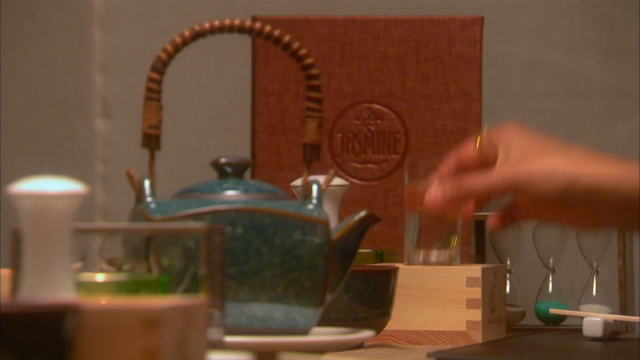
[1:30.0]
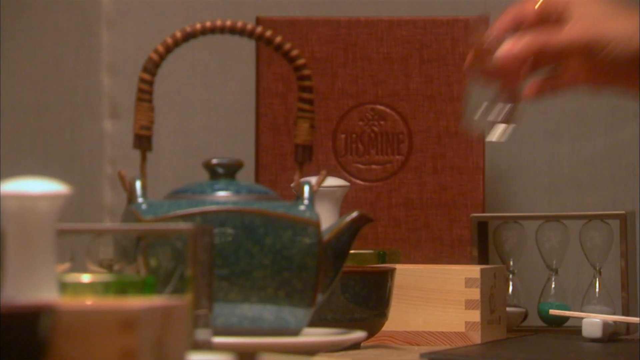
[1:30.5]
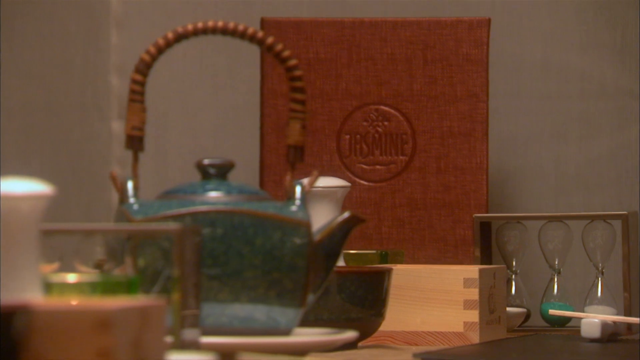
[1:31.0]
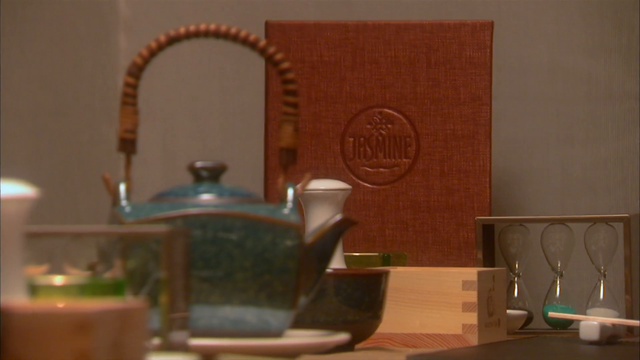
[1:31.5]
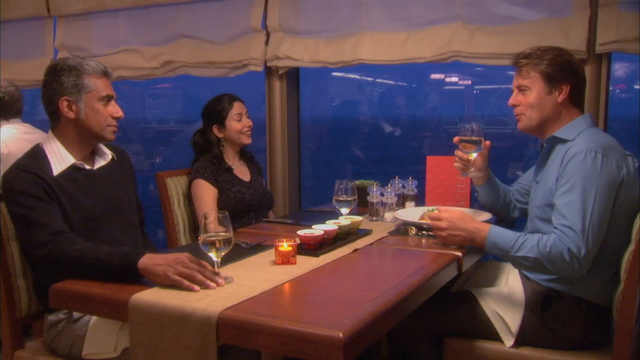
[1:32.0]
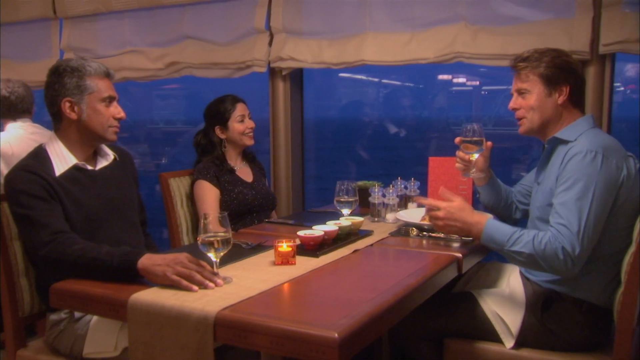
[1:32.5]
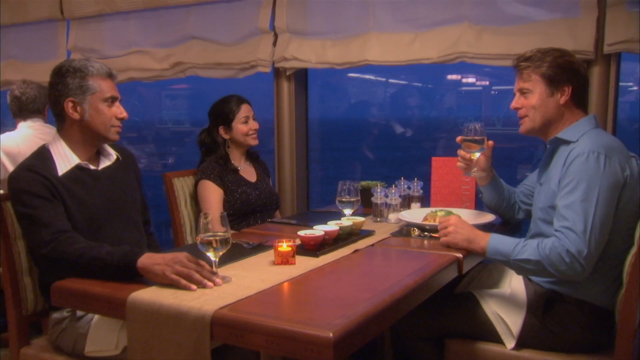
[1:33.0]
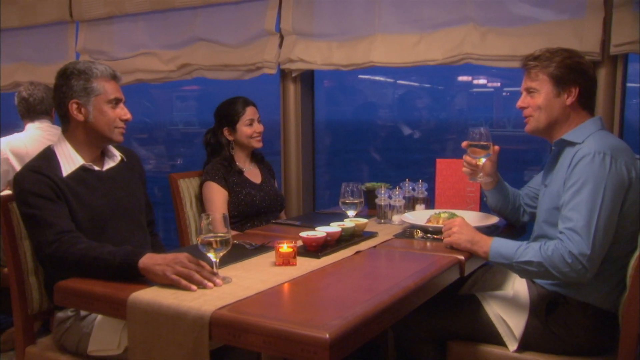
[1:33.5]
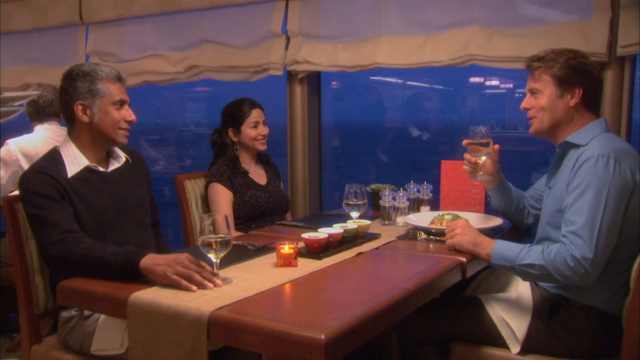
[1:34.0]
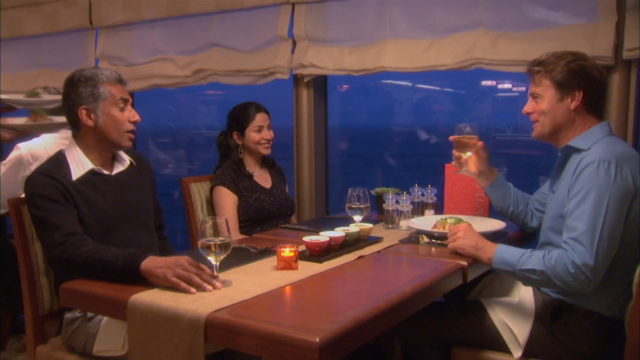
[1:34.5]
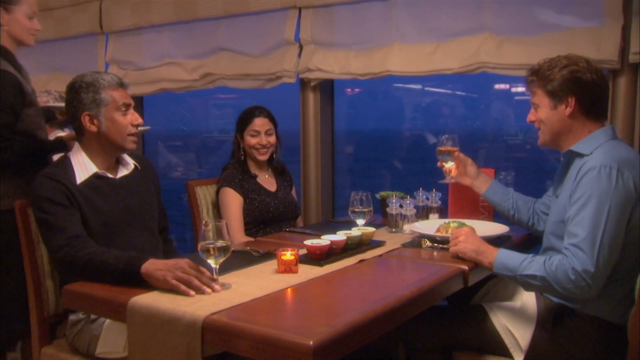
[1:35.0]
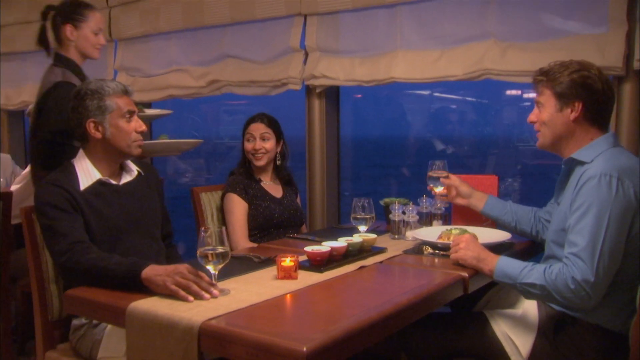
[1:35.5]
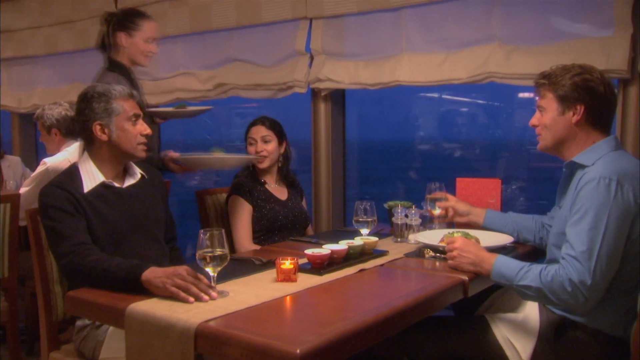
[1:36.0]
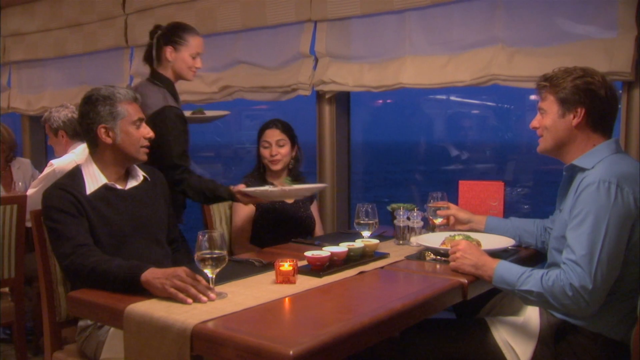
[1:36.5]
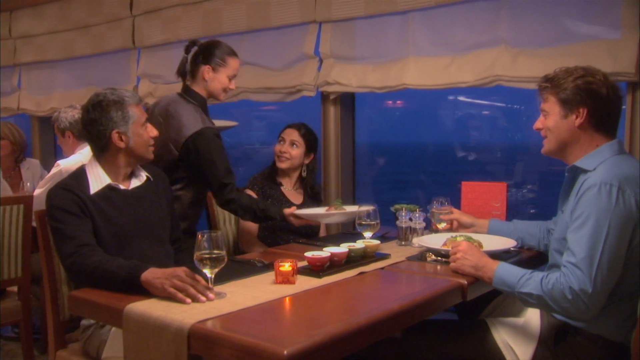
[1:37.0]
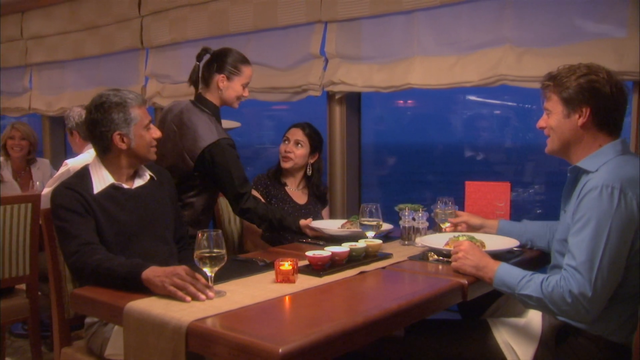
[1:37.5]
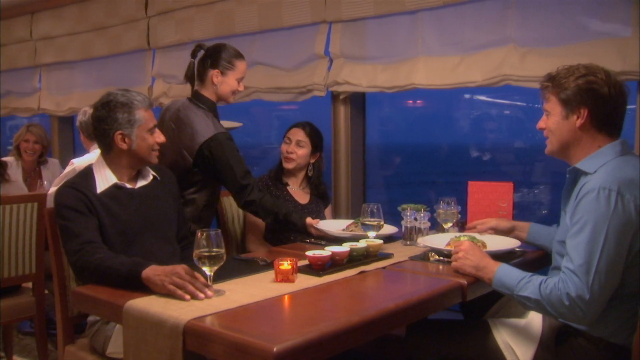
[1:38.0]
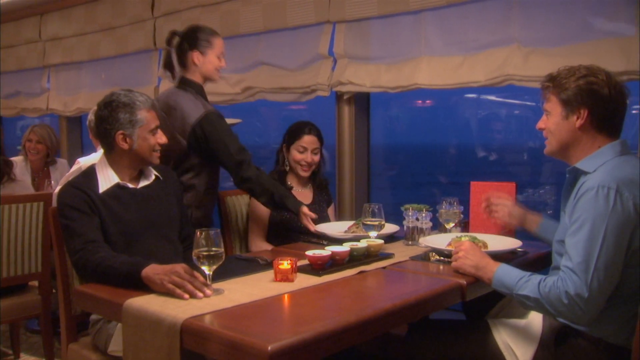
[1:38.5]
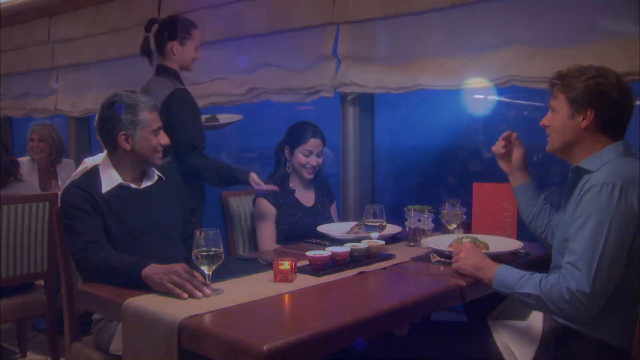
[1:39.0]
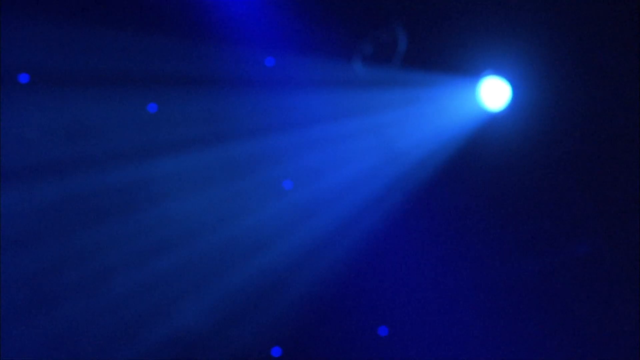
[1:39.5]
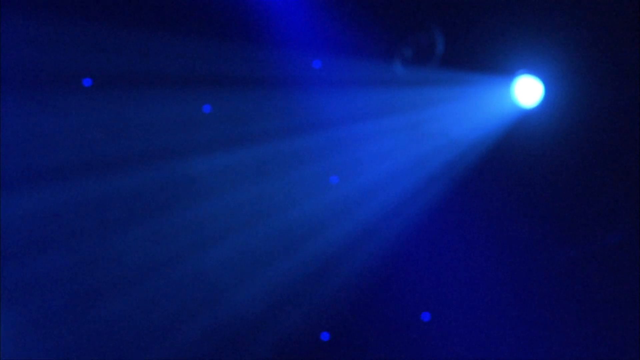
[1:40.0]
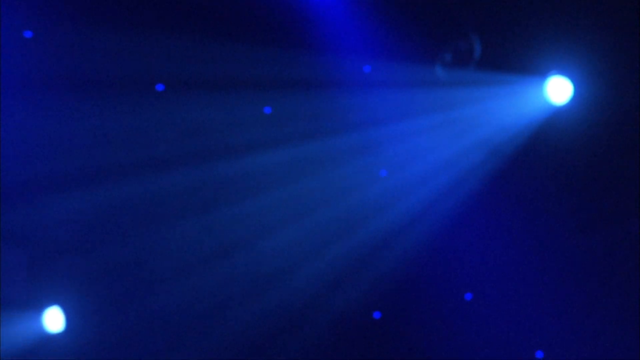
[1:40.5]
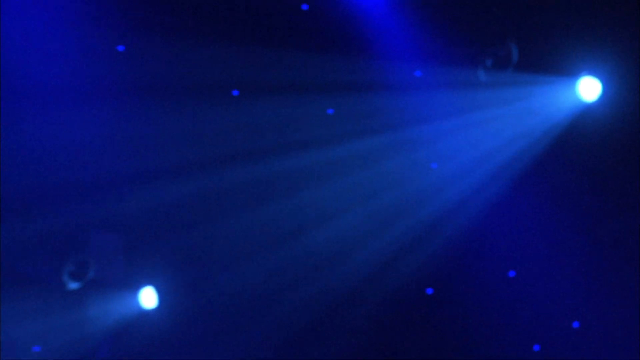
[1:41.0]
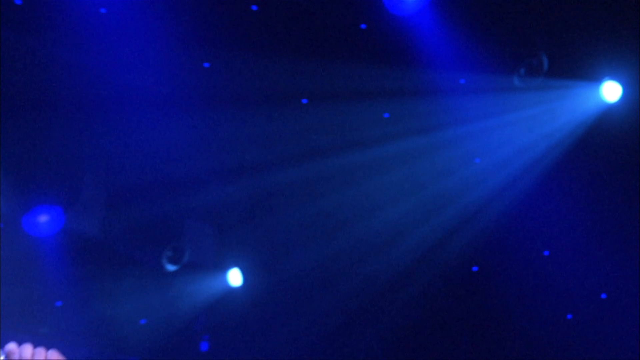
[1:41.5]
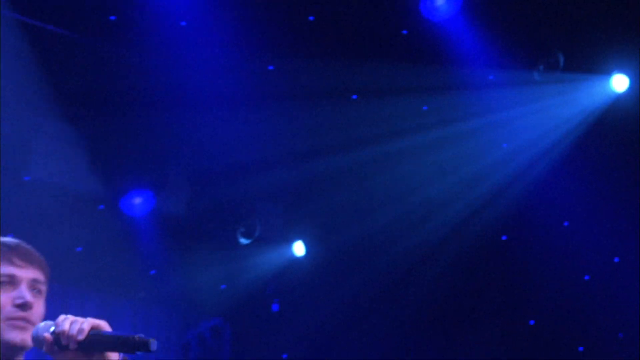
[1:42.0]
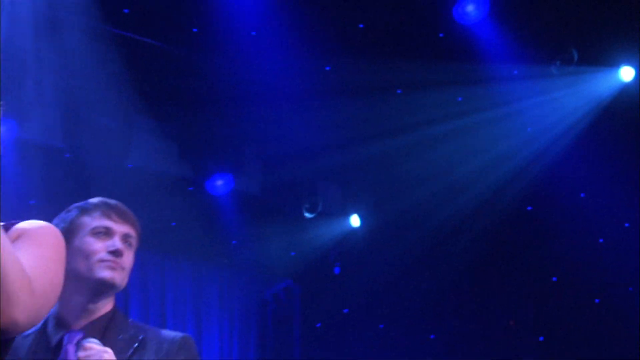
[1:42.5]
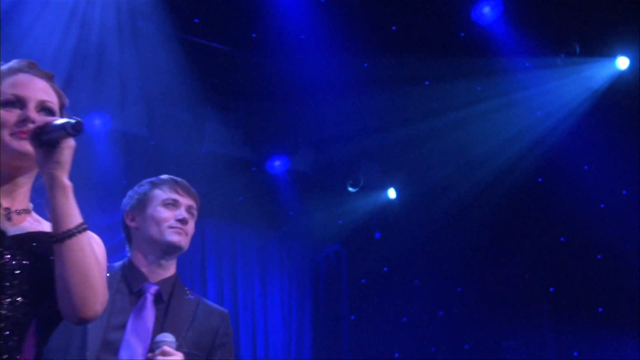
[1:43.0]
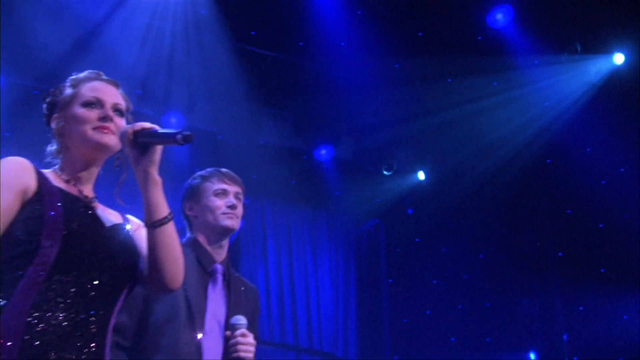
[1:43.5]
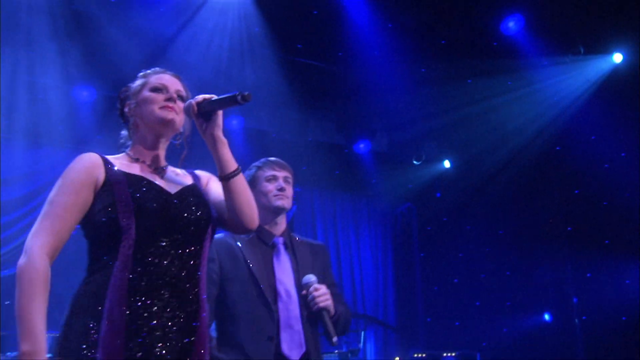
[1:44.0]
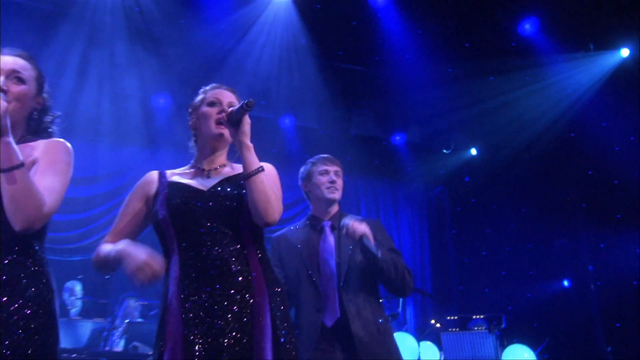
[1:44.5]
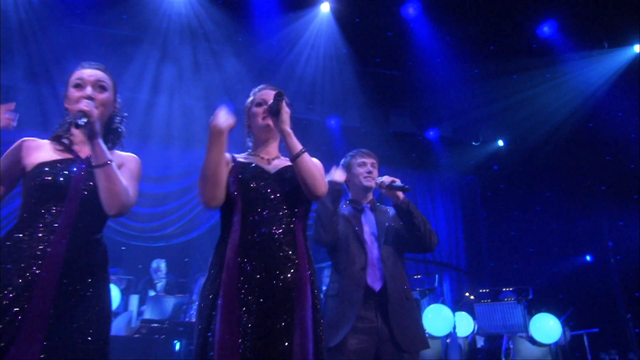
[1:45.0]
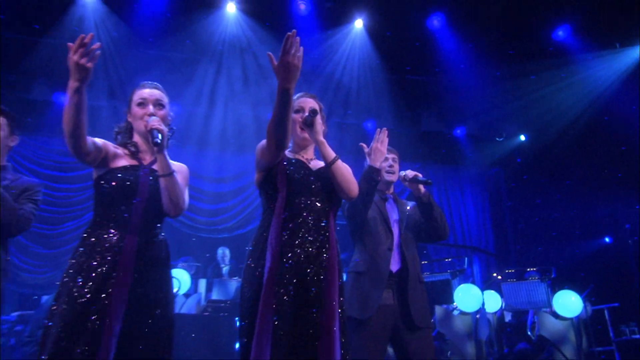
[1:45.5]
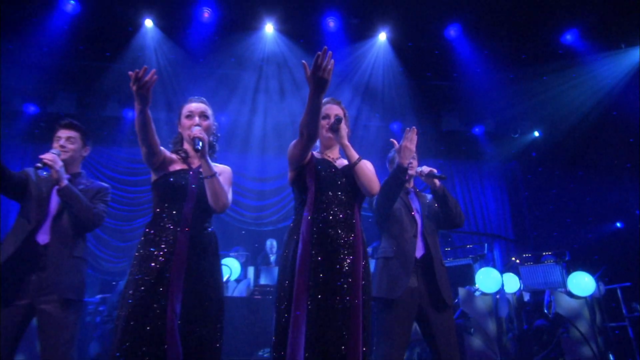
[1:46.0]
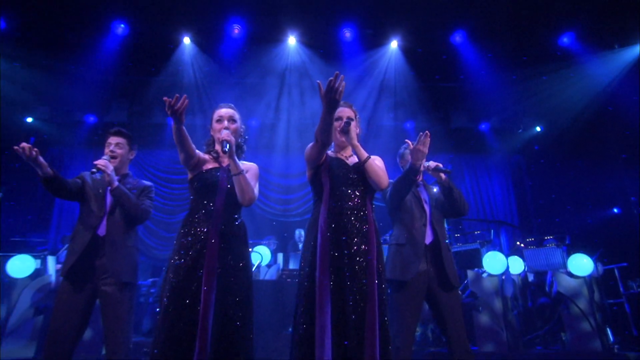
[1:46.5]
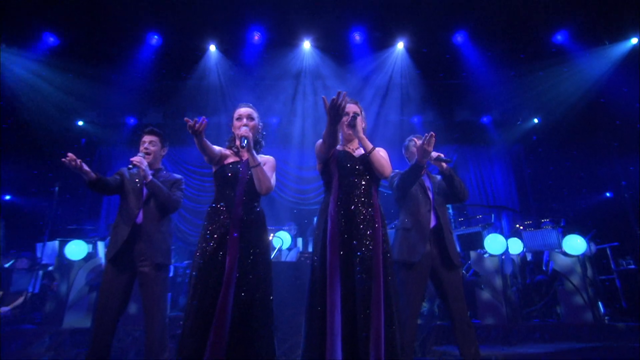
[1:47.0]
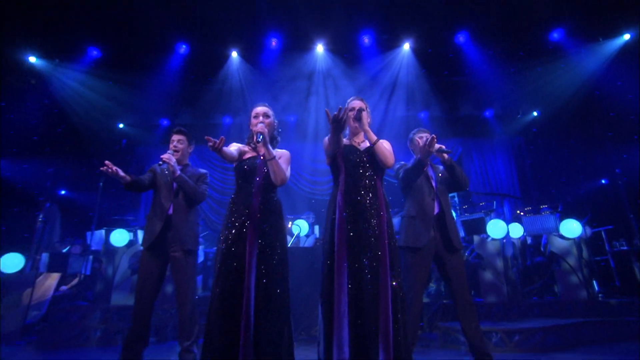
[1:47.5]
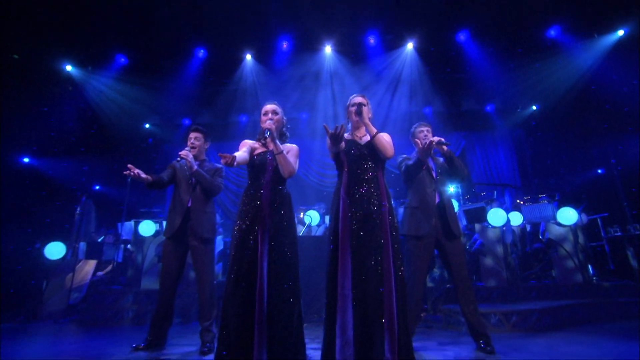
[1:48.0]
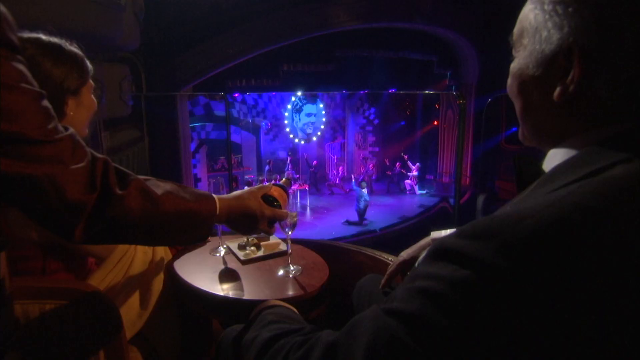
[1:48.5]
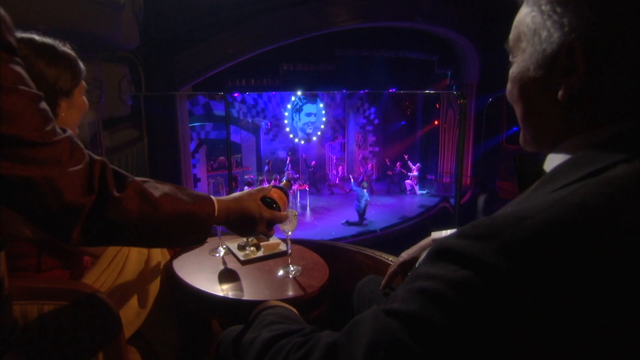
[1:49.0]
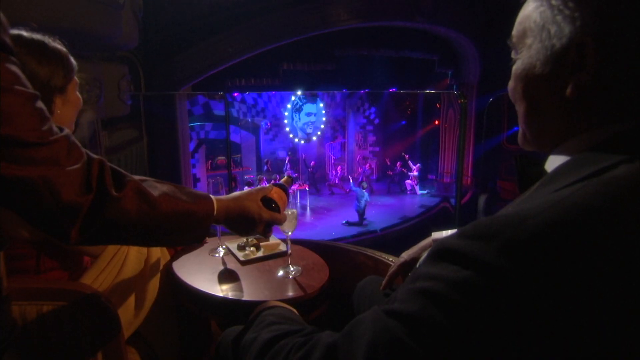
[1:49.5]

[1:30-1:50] A turquoise kettle with a brown handle is on top of a table, and a drink is poured into a clear glass. The scene changes to a table by a window overlooking a dark ocean, where three diners appear to be enjoying just drinks: a man in a black sweater over a white shirt, a woman in a black dress, and a gentleman in a blue shirt. Right at the end of the shot, the woman is served a plate of food. The scene then changes to people enjoying a show in some sort of theater. A spotlight is on three singers, a man and two women, and then the shot widens to show another man; a couple is seated in the audience watching. The two men and two women on stage are dressed nicely, the women in long black dresses, and they sing to the audience using microphones.